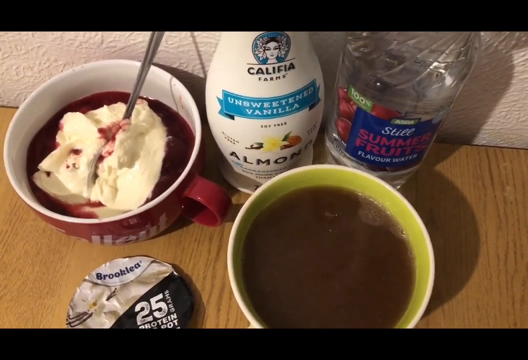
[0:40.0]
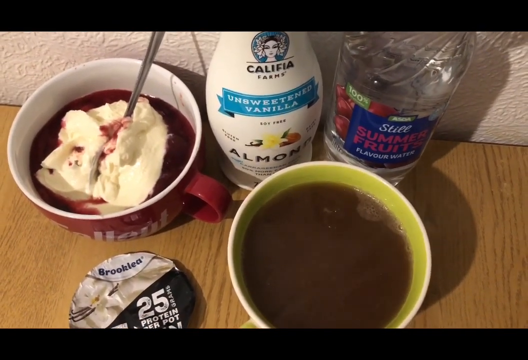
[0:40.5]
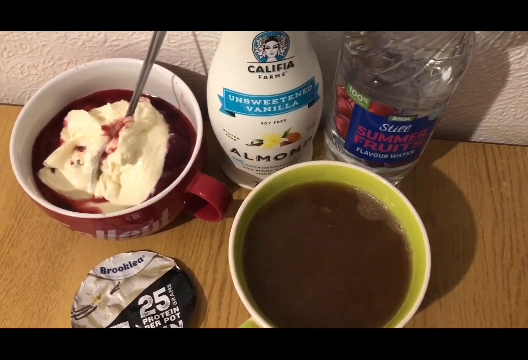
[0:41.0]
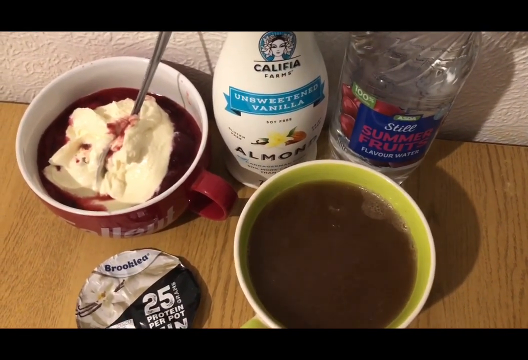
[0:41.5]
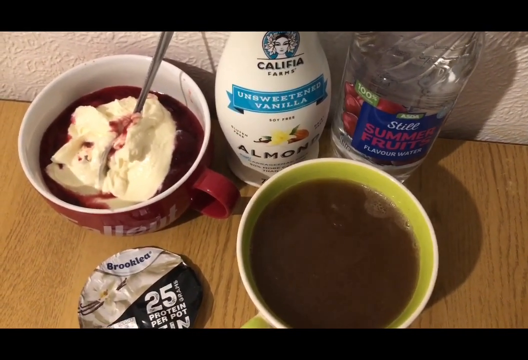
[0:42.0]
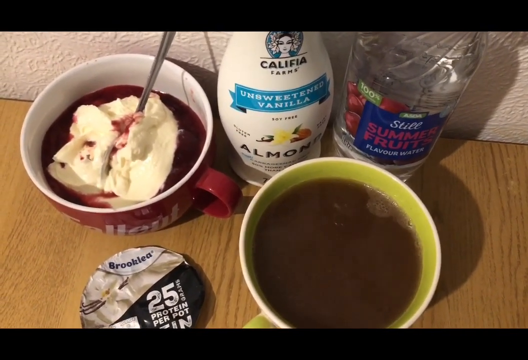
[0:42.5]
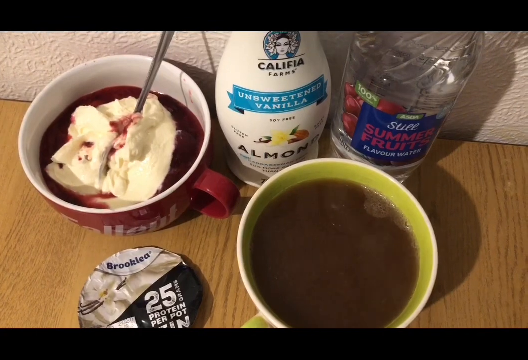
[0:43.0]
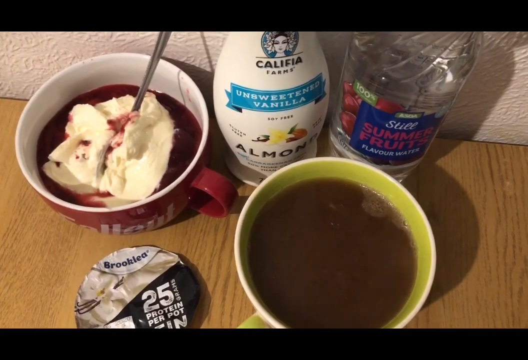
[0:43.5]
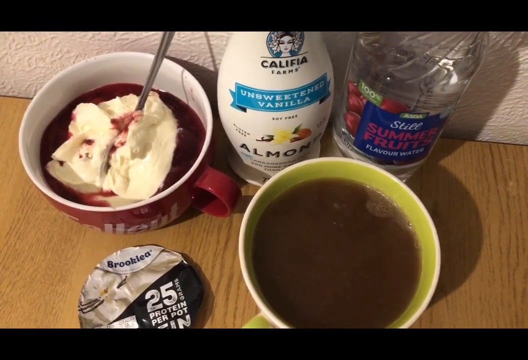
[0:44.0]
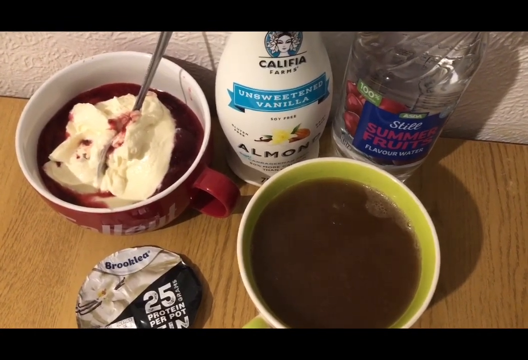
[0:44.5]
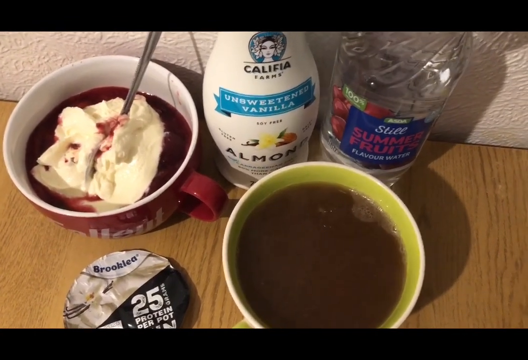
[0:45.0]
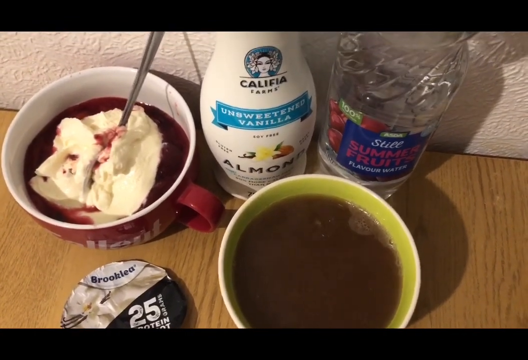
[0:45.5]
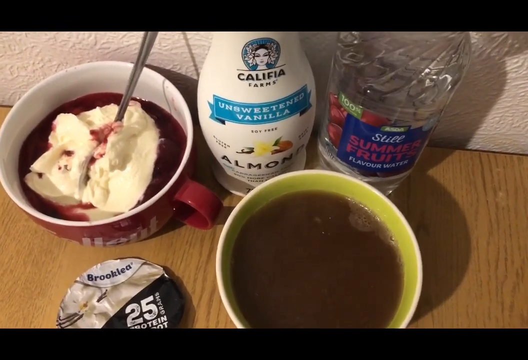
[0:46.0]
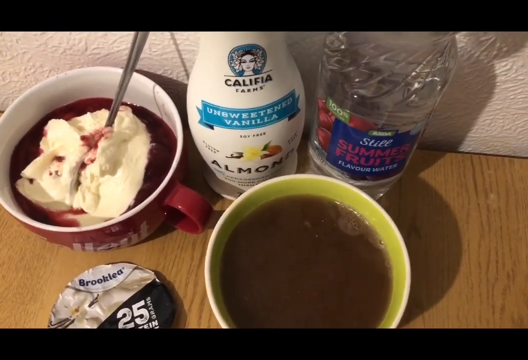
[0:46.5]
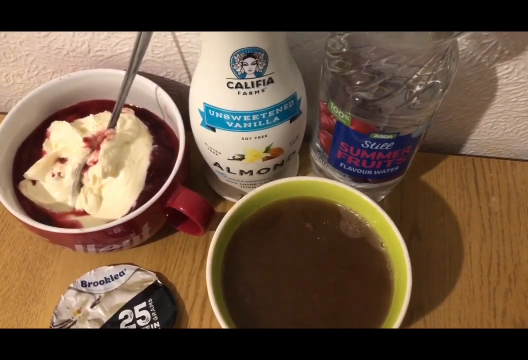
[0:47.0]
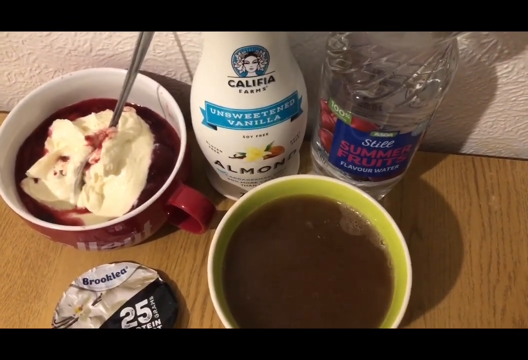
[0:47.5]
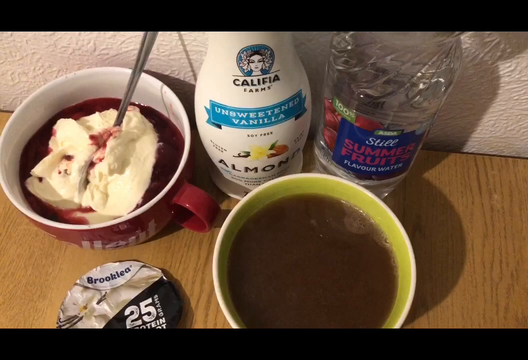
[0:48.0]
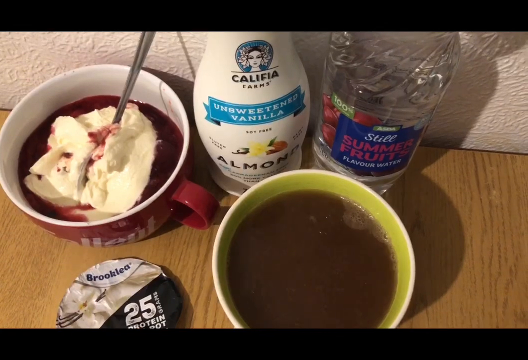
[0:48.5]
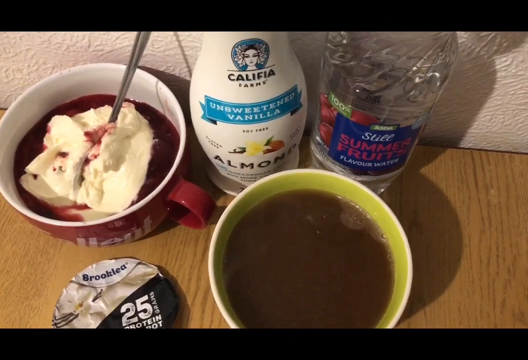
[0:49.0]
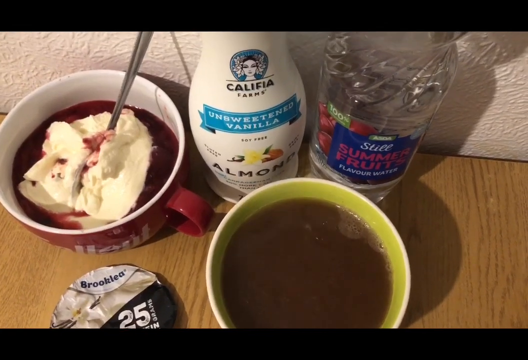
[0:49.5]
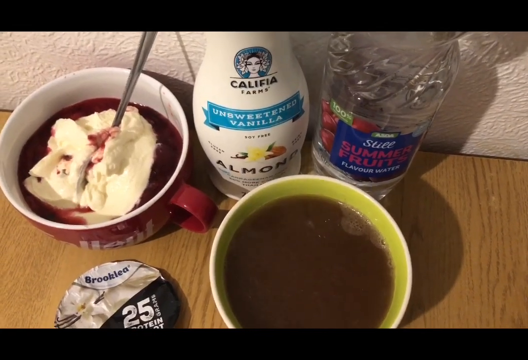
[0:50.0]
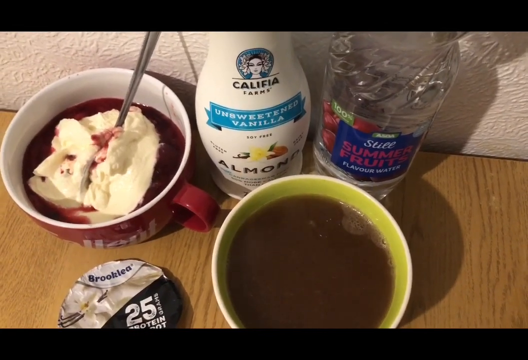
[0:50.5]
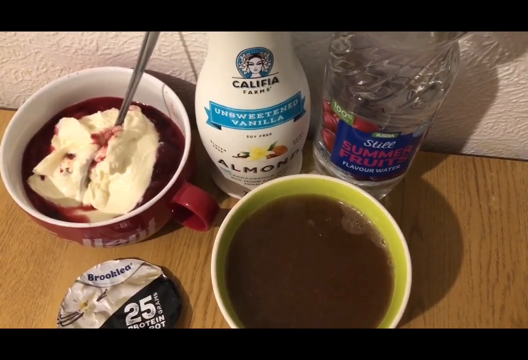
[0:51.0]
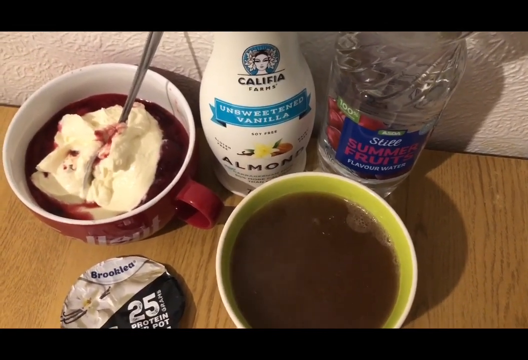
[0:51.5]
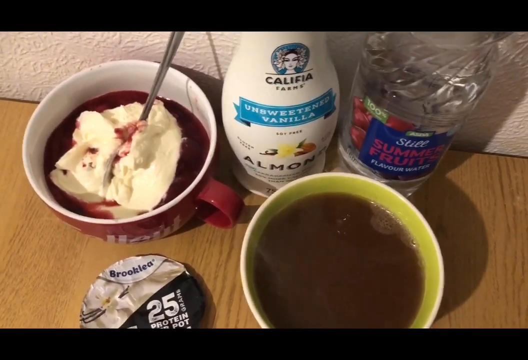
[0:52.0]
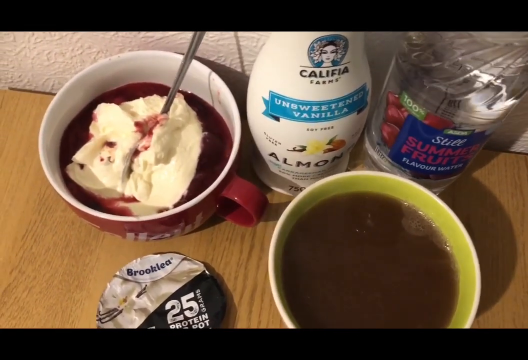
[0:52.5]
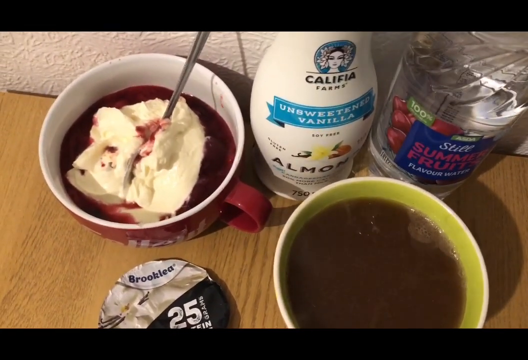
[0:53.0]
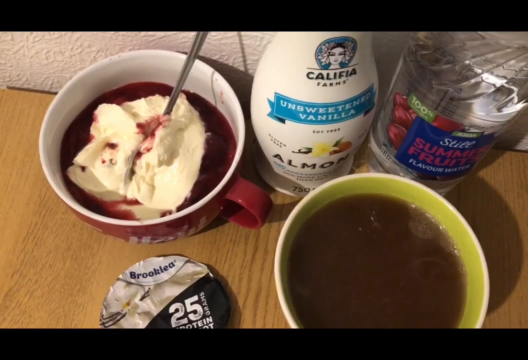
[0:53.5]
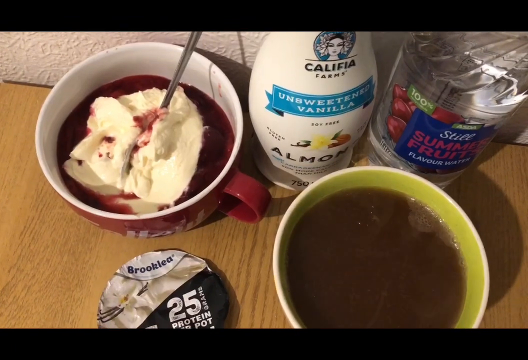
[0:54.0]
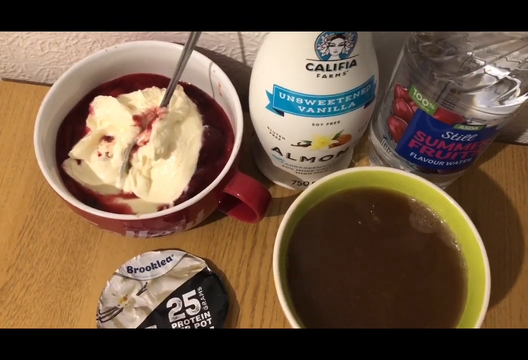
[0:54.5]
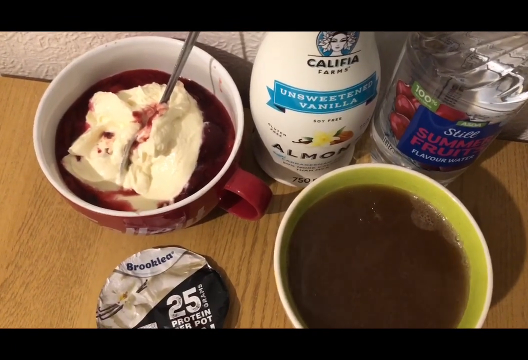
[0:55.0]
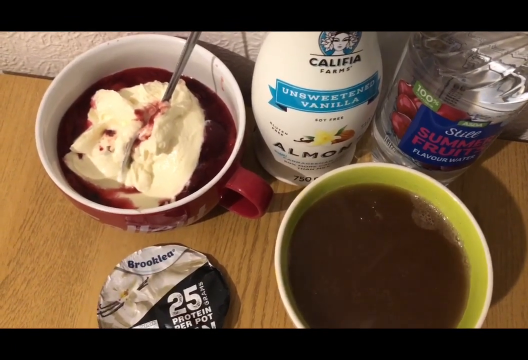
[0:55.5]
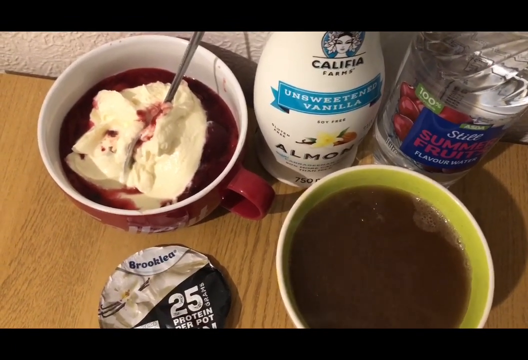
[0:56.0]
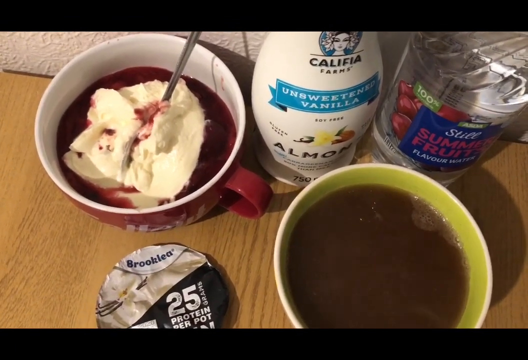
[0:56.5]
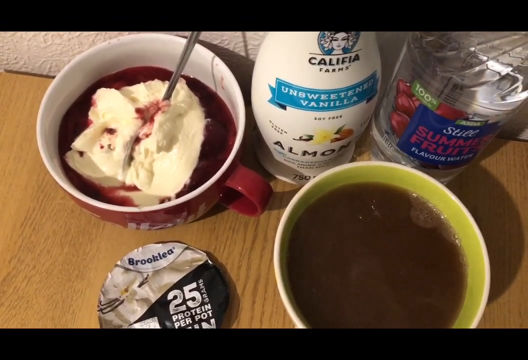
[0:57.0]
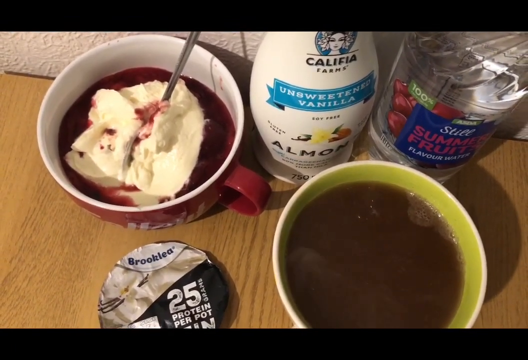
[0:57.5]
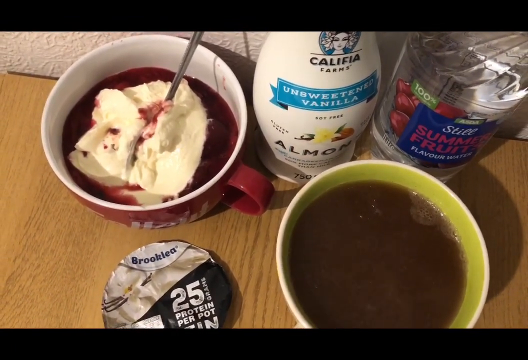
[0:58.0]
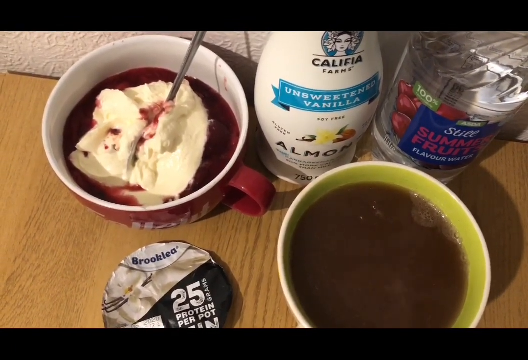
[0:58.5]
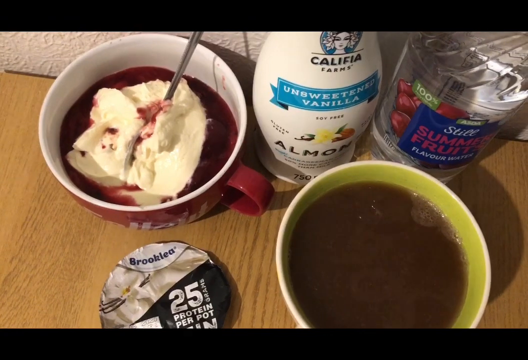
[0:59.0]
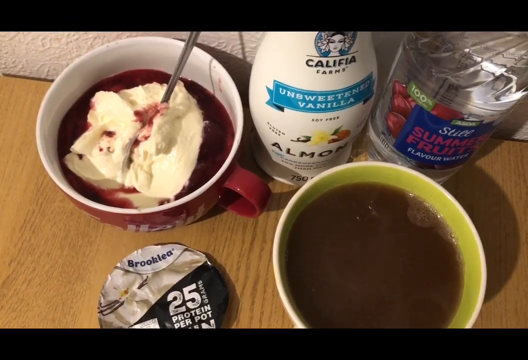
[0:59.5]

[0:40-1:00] A light brown wooden tabletop is set against a white textured wall. On the left of the table is a large red cup with a small red handle and white text on the front. Its inside is white and holds what looks like white ice cream or yogurt, with dark red berry sauce around the outer borders and a spoon stuck in the middle. To its right is a tall white container of Califia Farms unsweetened vanilla almond milk, and to the right of that a tall clear bottle holding a clear liquid, with a label on the front that says "still summer fruits flavor water" and pictures of something like red circular fruit. In front of that is a large light green cup almost filled to the top with dark brown coffee, with a little steam coming from it. To its left, lying on the table, is what looks like a circular foil yogurt-cup lid, roughly silver on one side and dark blue on the other, saying "Brooklea 25 protein per pot." The person seems to be standing in front of the table filming down. The camera pans slightly to the left, and all the foods remain in focus.